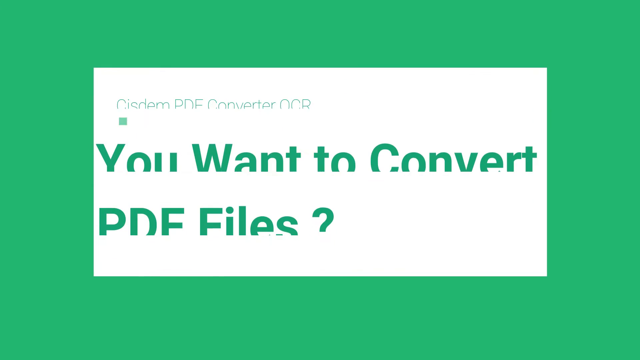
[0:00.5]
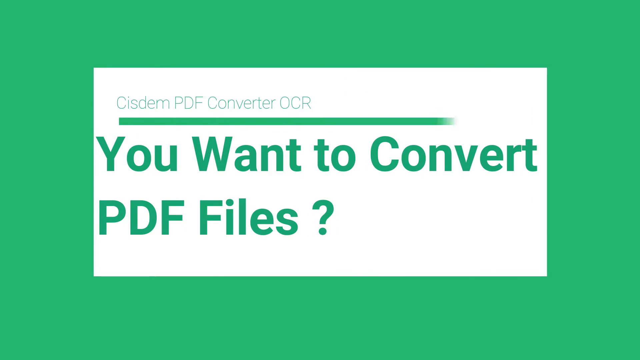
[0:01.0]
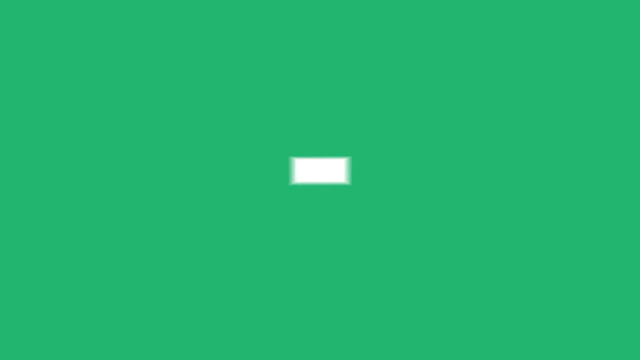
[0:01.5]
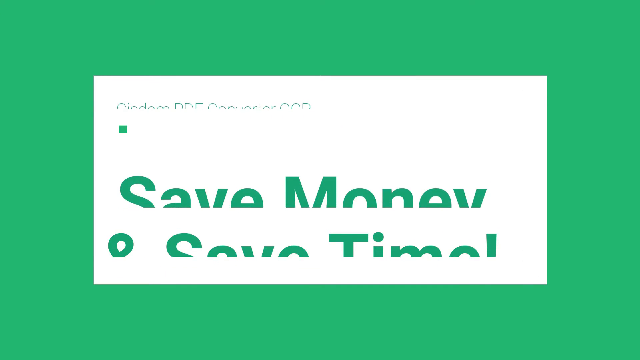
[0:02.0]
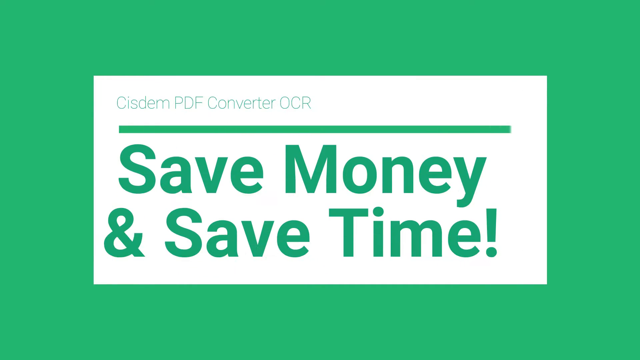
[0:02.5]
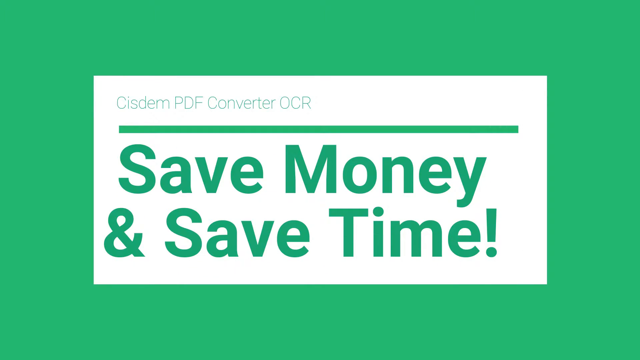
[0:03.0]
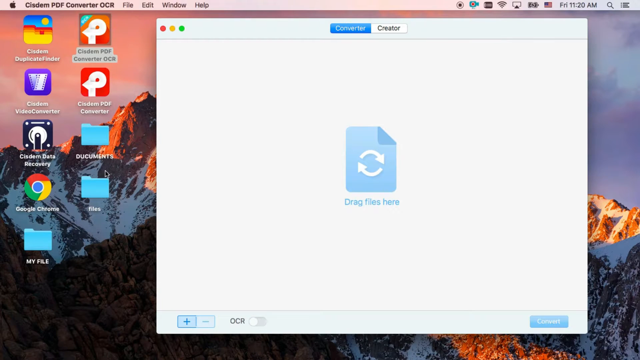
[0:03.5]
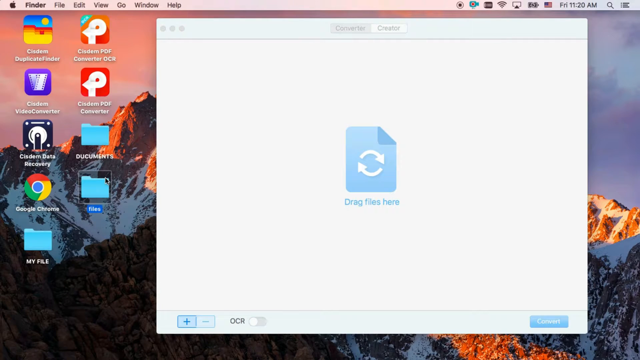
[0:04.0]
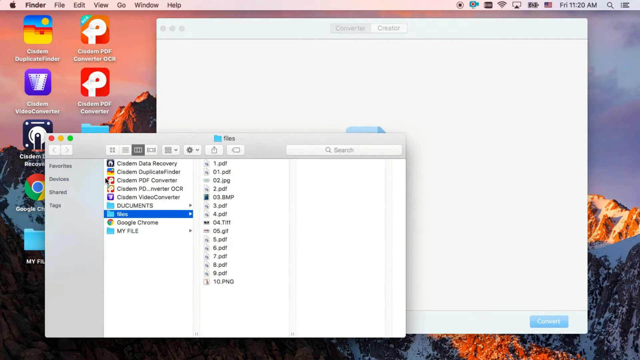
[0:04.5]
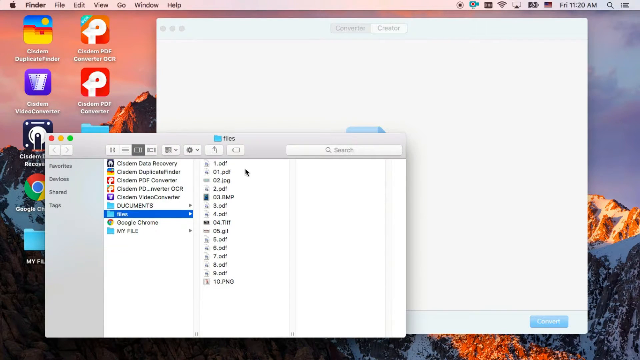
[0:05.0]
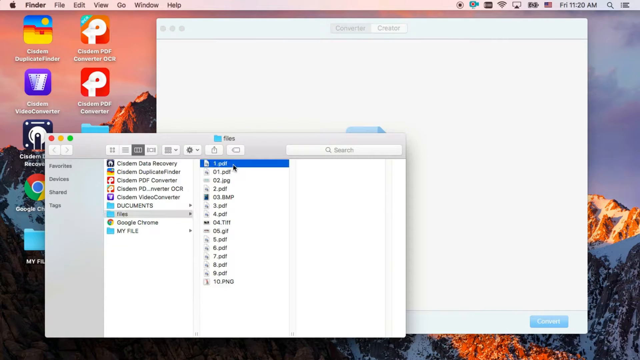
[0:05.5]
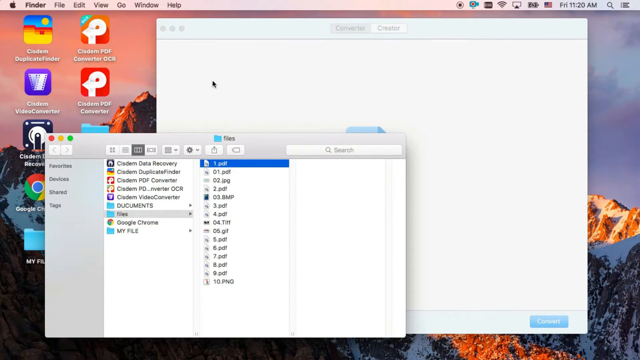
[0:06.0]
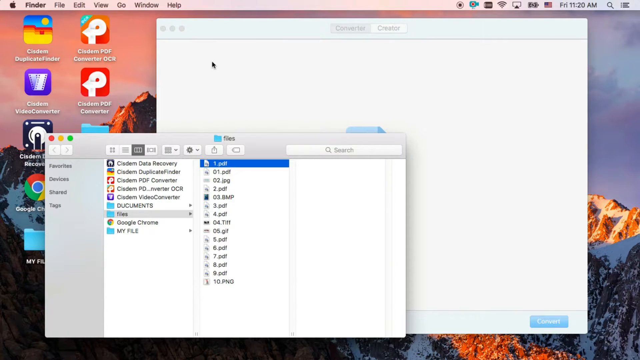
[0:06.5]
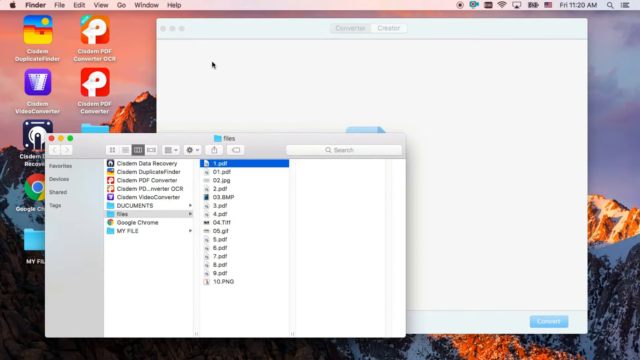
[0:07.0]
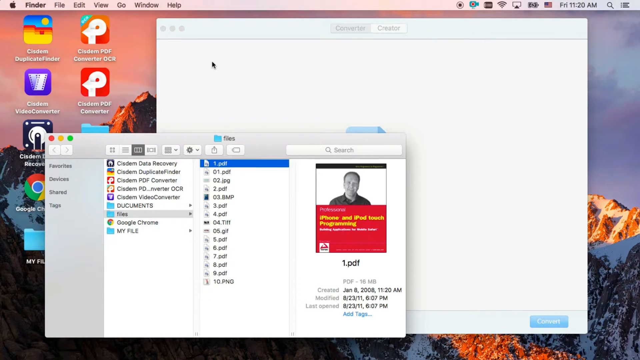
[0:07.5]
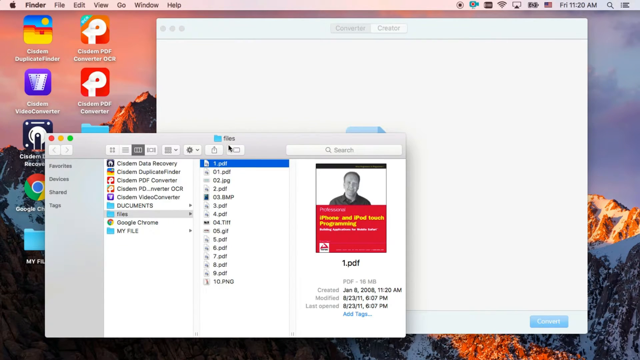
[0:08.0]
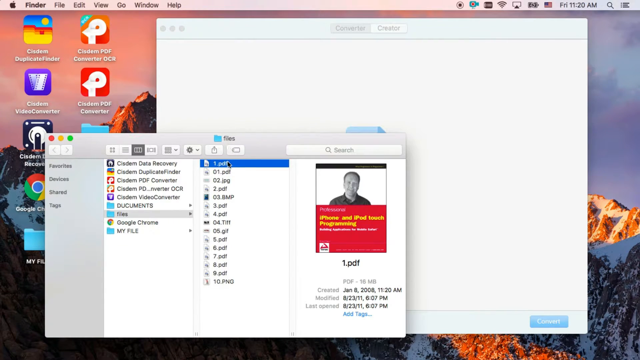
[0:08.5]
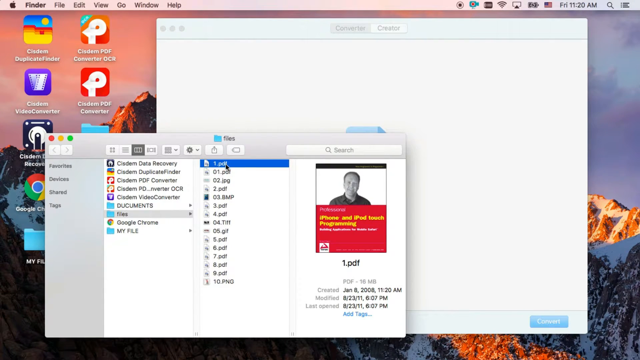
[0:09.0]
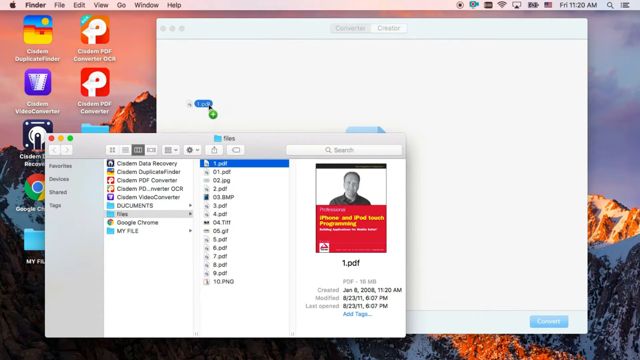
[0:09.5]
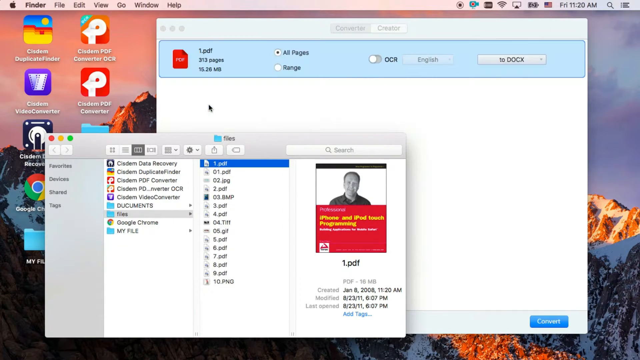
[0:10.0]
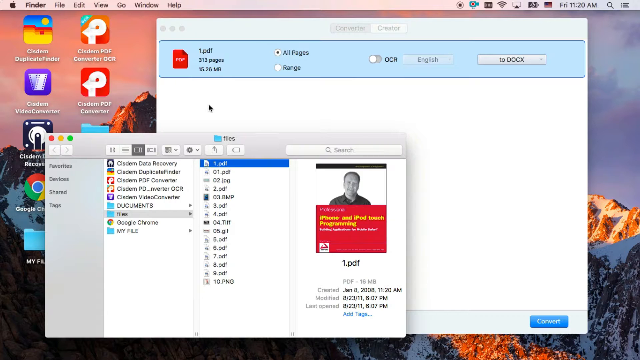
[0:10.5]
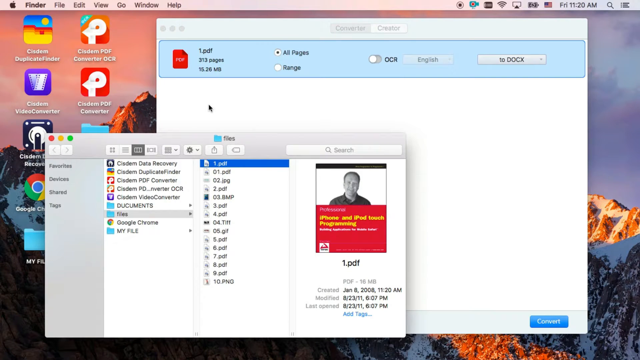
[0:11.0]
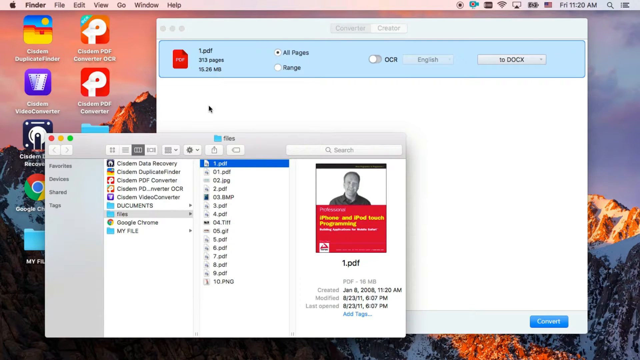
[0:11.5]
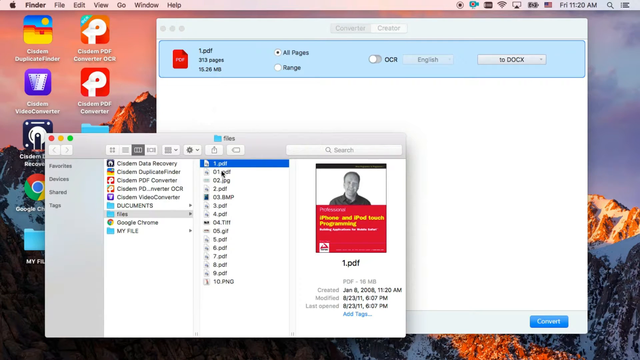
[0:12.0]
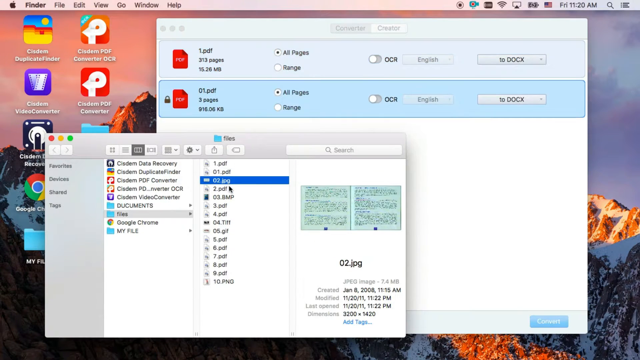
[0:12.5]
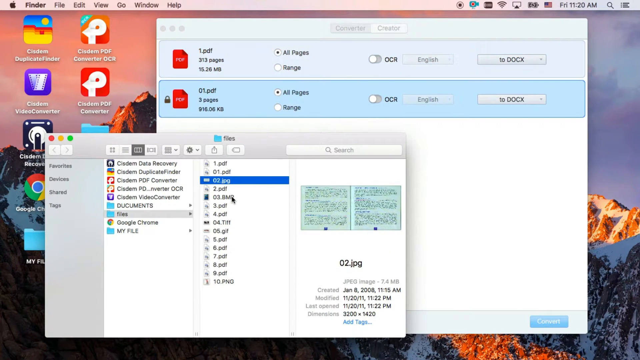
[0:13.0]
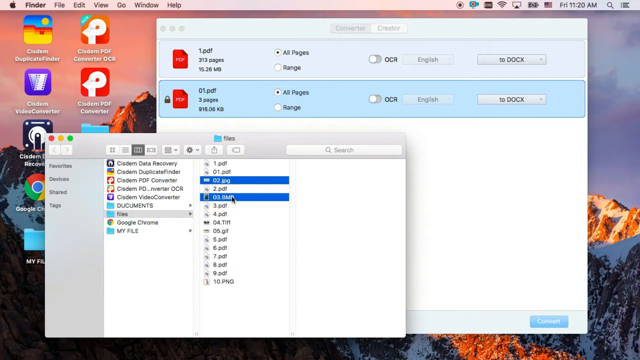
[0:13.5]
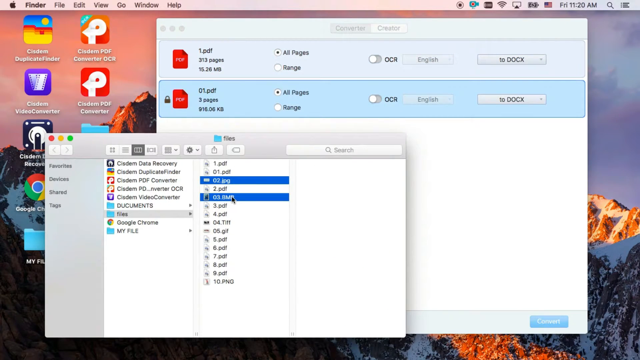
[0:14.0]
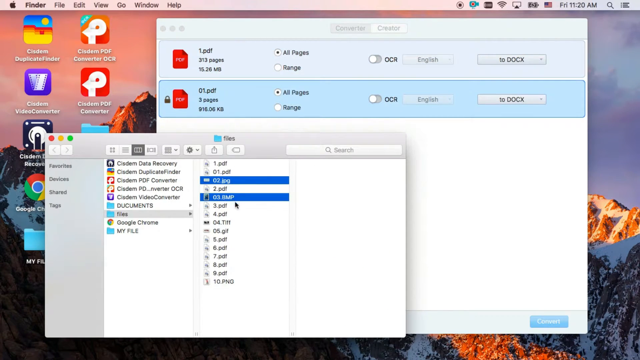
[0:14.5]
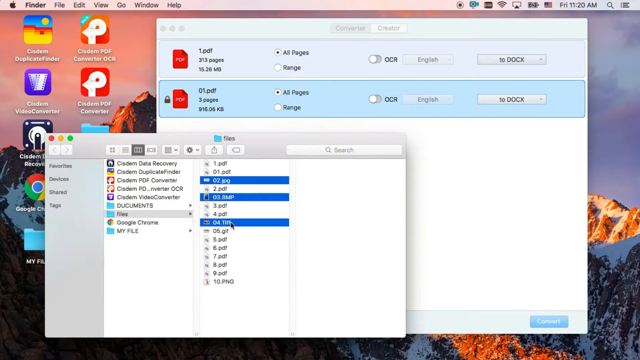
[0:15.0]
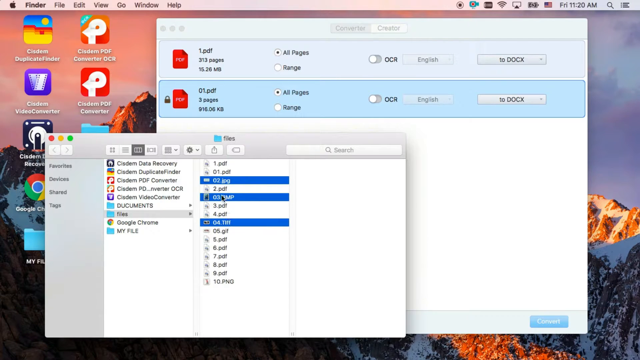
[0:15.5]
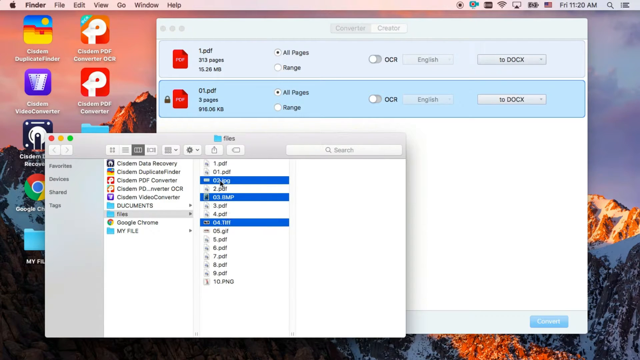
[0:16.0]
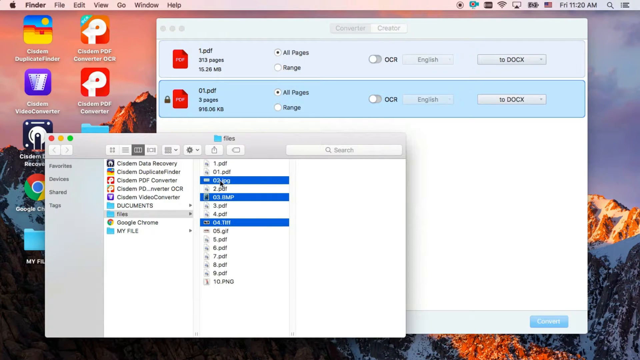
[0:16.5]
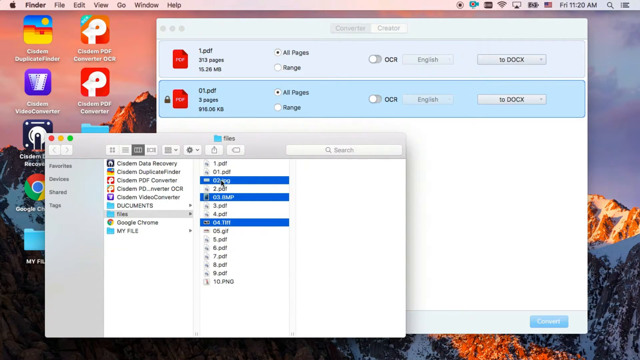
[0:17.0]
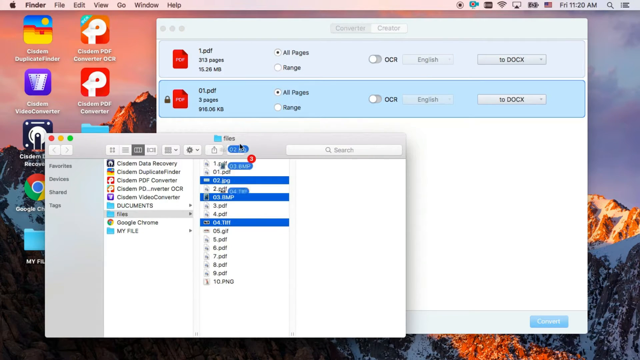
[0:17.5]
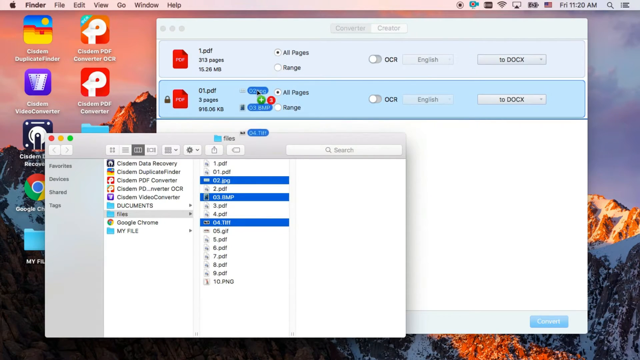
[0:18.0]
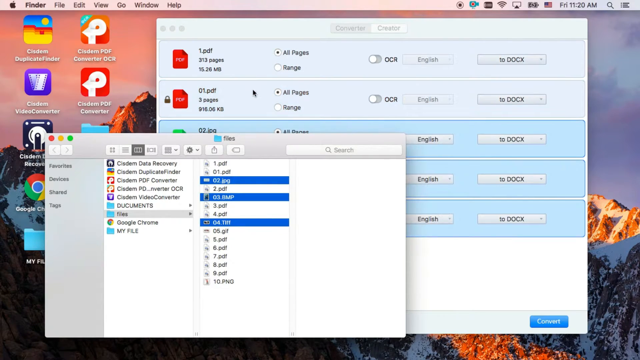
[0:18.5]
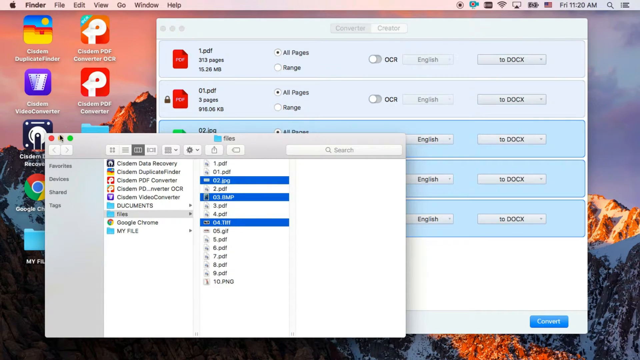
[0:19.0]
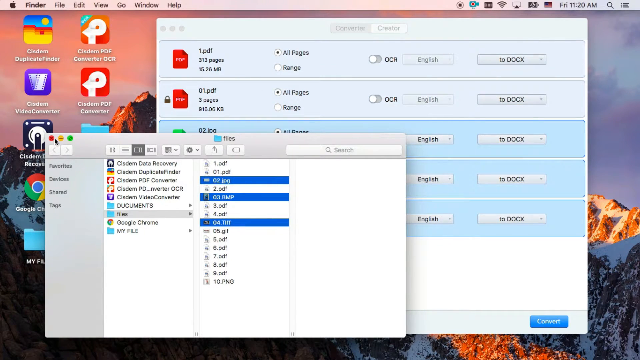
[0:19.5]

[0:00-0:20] The video opens on a green background with white square backgrounds bearing green letters that read "CisDem PDF Converter OCR." Big blue and green text asks, "you want to convert PDF files?" The next screen reads "save money and save time!" An Apple desktop then appears, and what seems to be a PDF is opened from the desktop computer. A man drags files onto the converter window to the right, about five files in total, including image files. First he selects two PDF files, probably holding the control button while using the mouse, and drags them in. He then does the same with a JPEG, a BMP and a TIFF file, selecting those three files and dragging them into the converter.